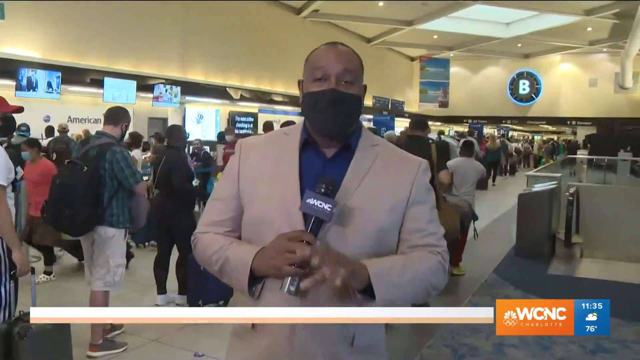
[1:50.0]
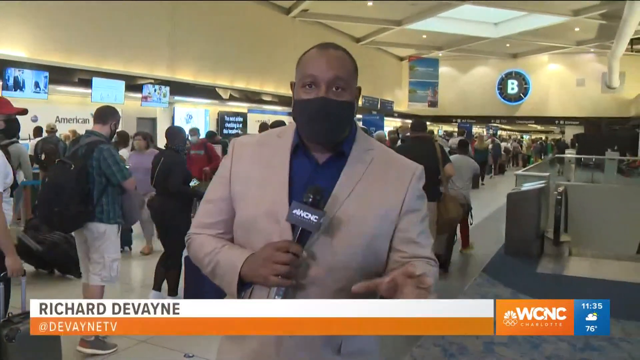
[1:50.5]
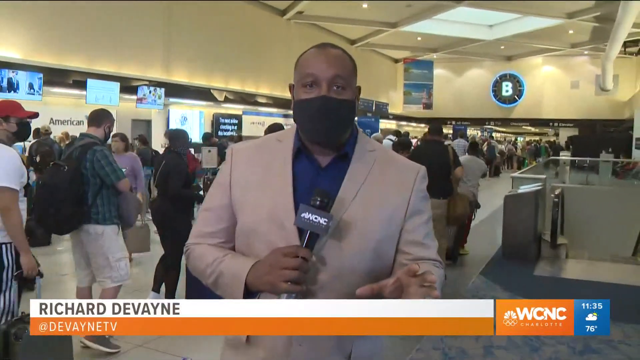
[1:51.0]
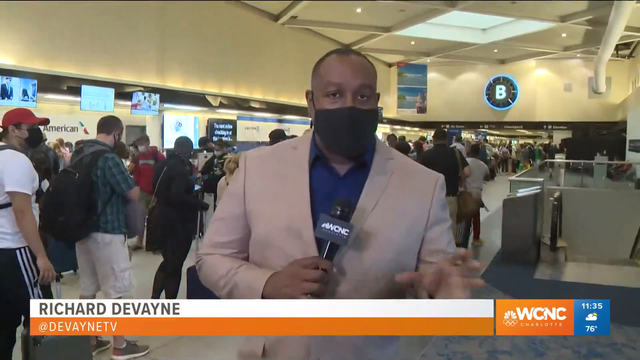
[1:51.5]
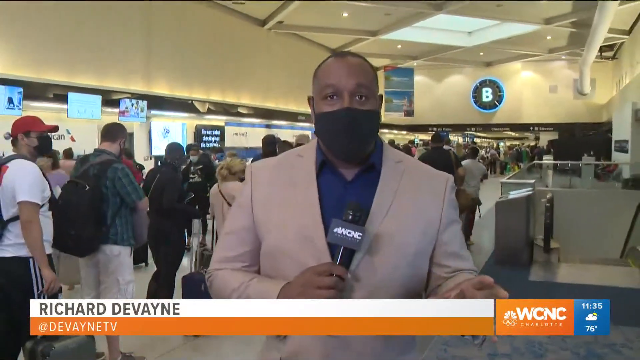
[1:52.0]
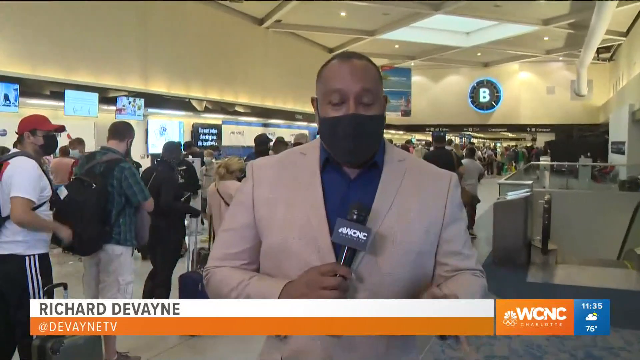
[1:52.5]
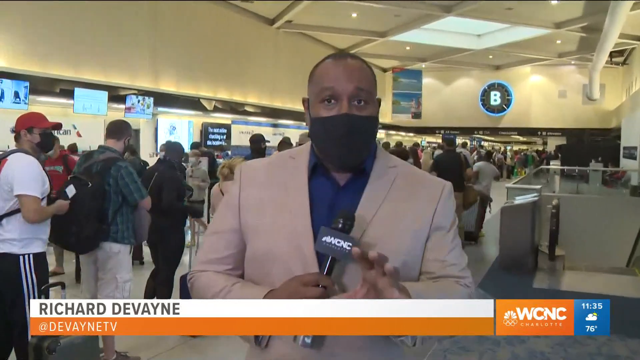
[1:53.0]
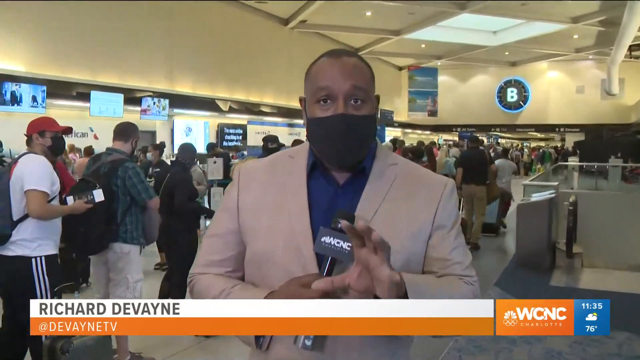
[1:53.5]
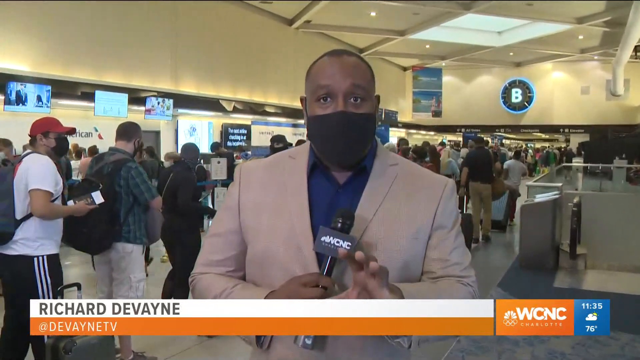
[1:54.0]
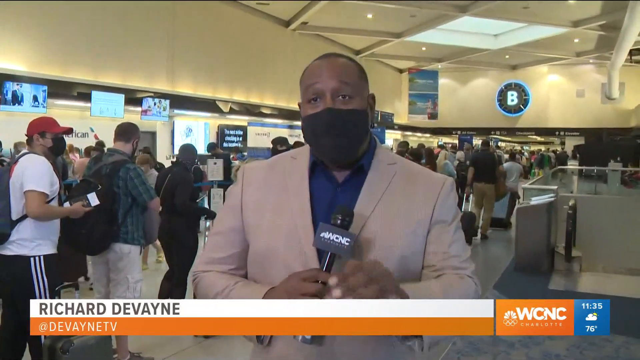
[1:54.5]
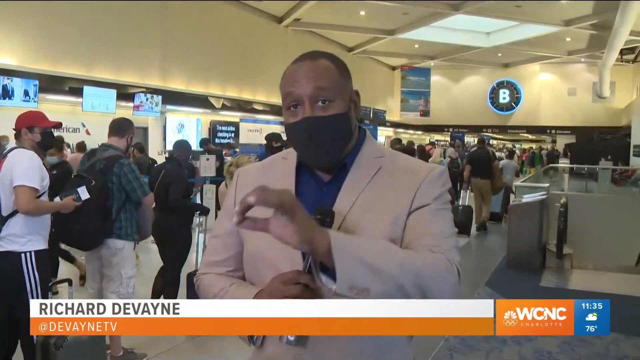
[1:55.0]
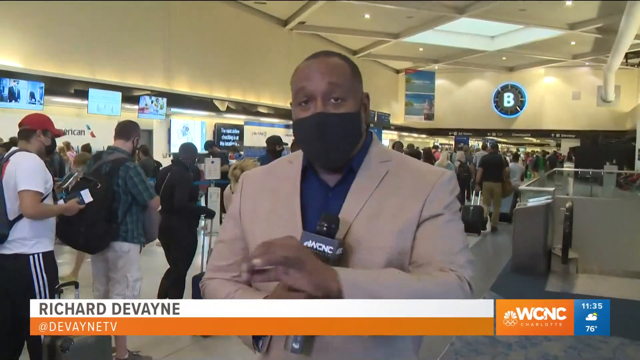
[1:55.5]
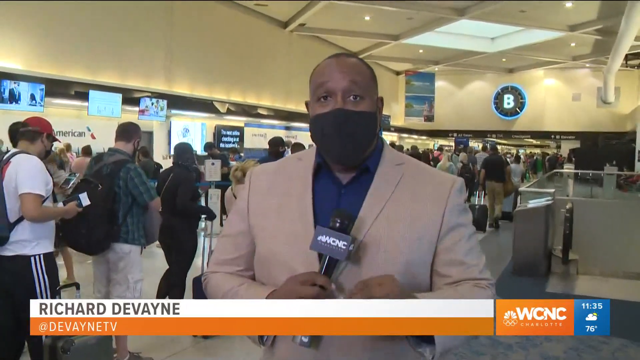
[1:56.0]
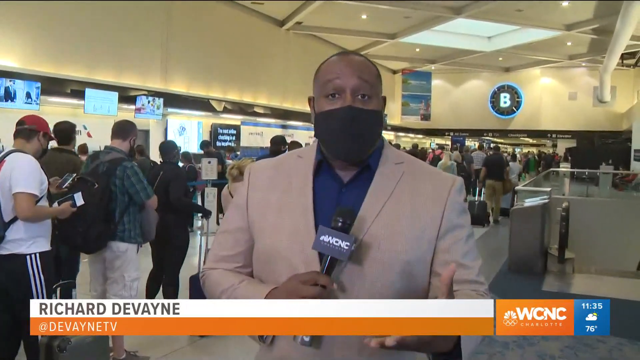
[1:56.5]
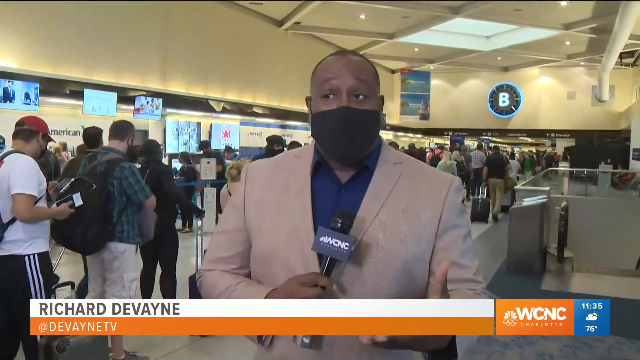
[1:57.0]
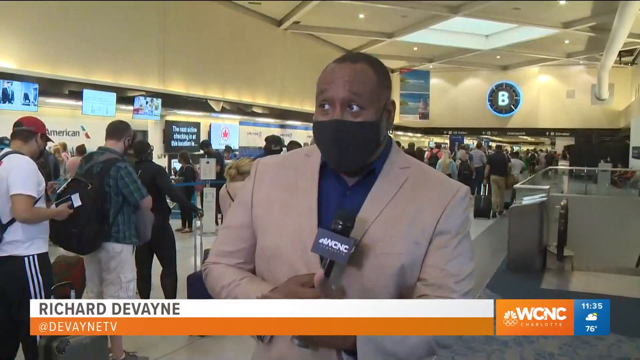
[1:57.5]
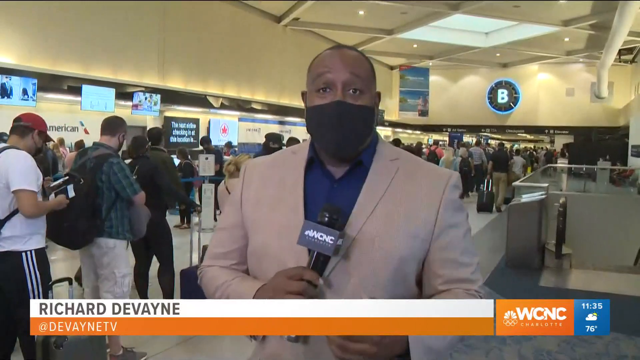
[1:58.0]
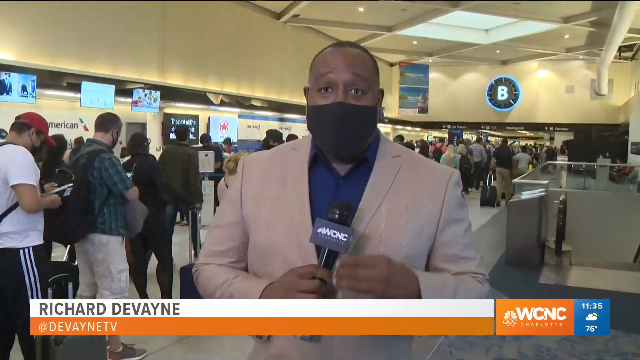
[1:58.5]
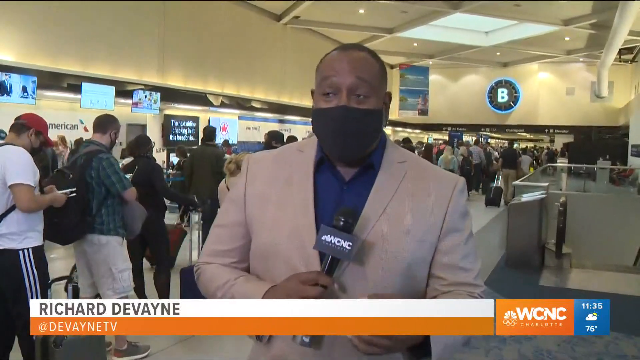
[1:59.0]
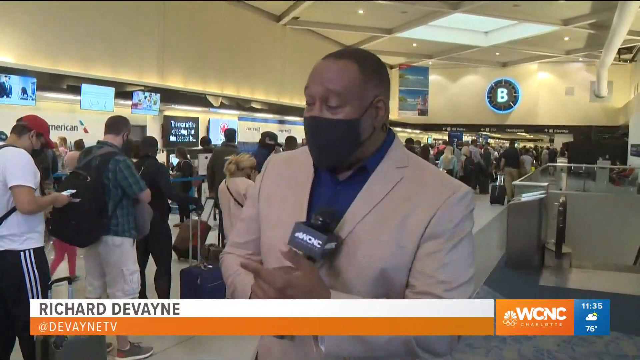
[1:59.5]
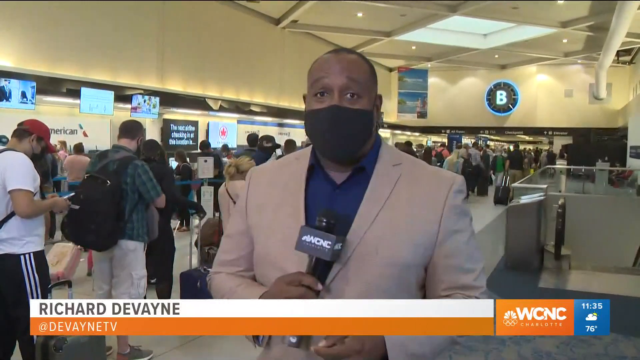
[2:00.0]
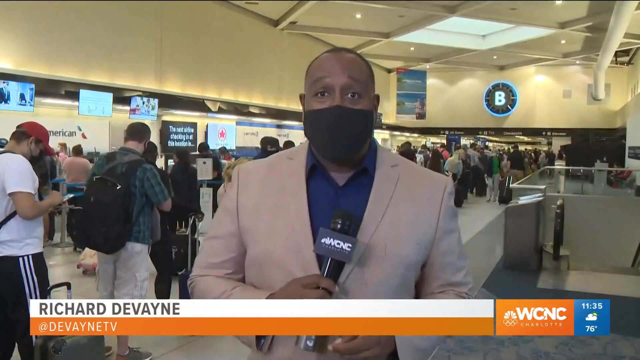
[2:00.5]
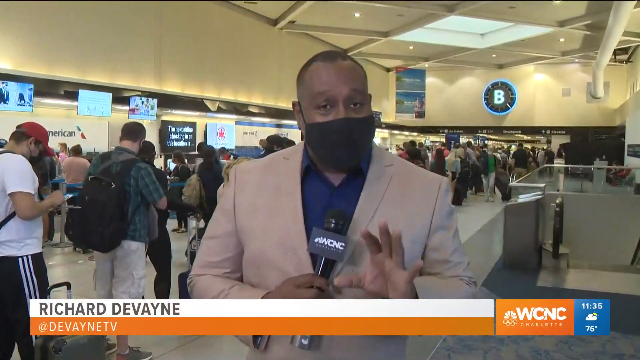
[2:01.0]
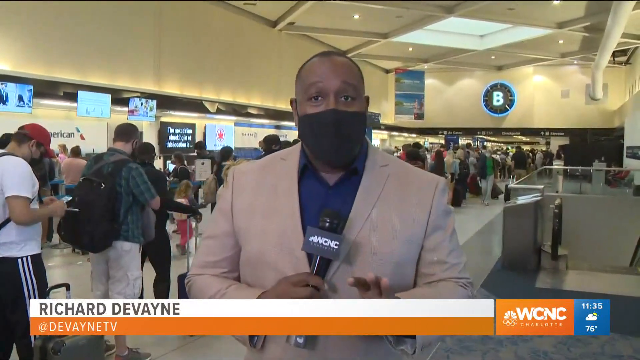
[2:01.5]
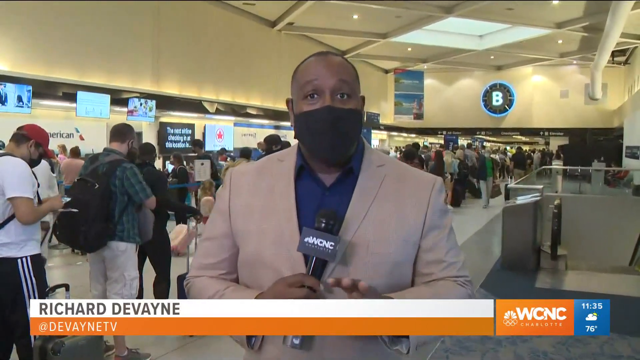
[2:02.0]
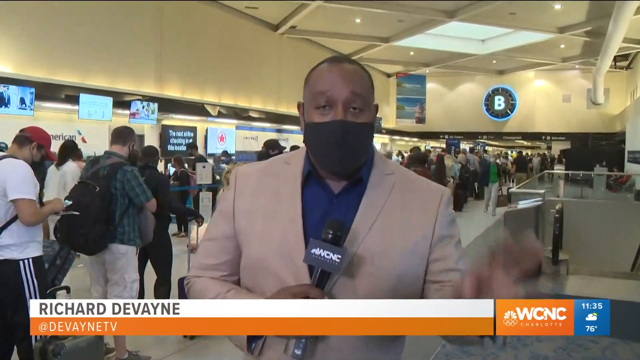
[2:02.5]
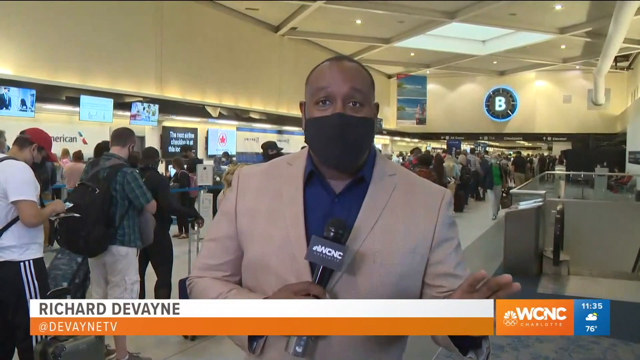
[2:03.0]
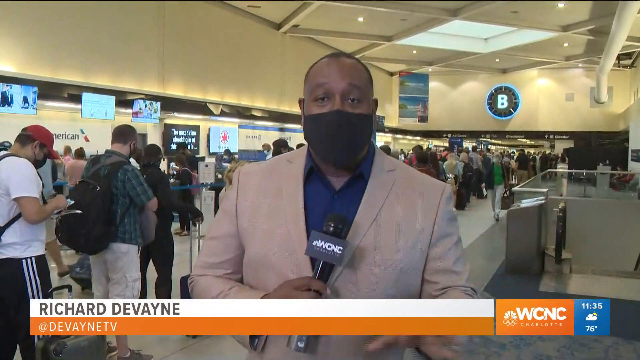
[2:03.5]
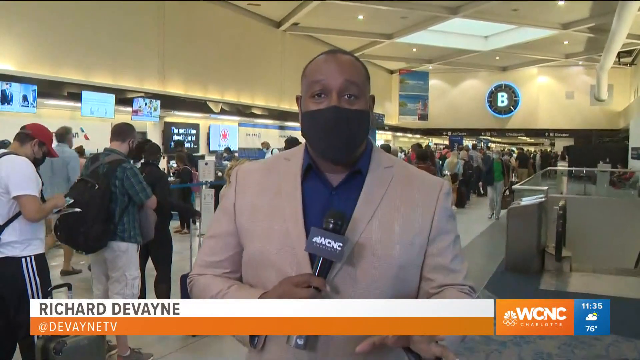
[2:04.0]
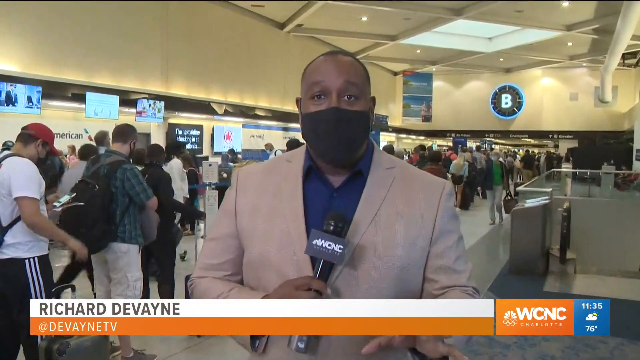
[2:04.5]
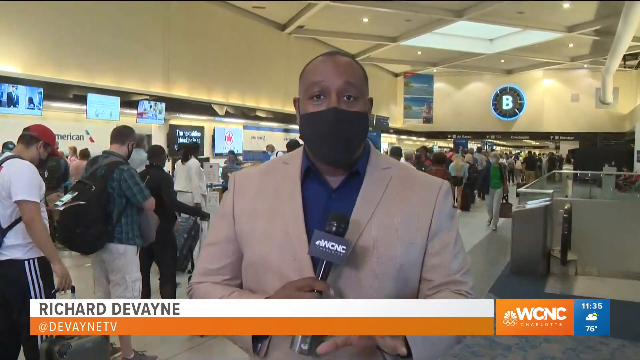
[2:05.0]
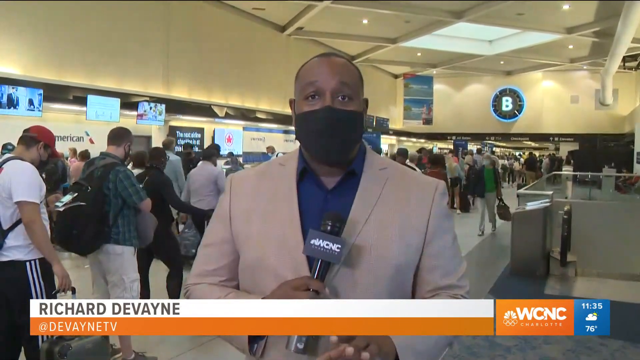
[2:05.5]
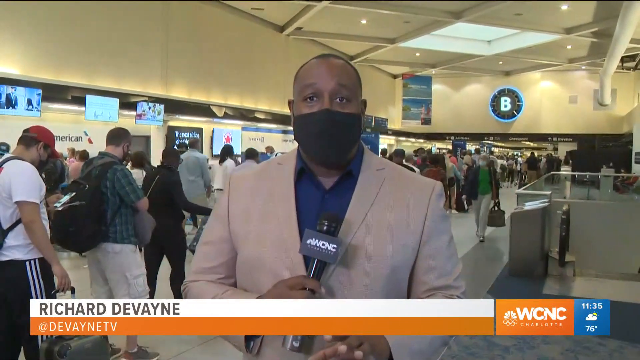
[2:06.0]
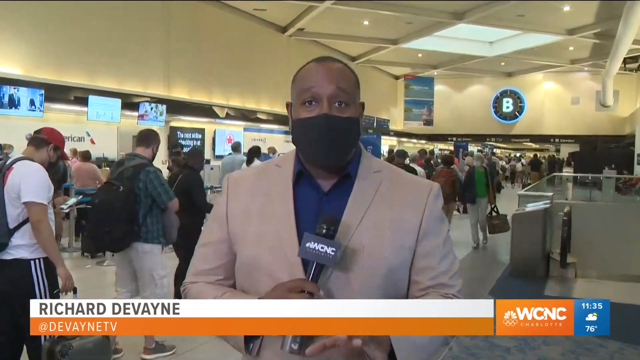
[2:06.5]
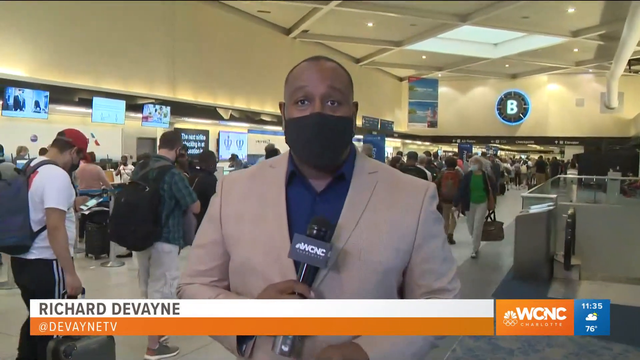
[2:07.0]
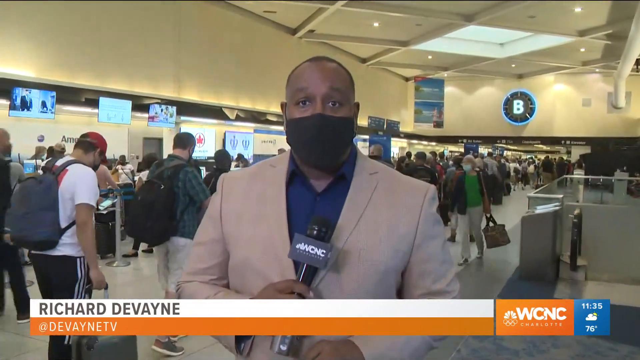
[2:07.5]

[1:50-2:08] A lot of people are gathered at the airport because of flight cancellations. There are many information desks, and displays show a lot of information.